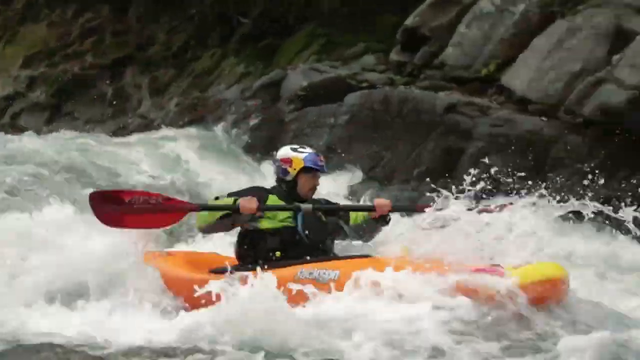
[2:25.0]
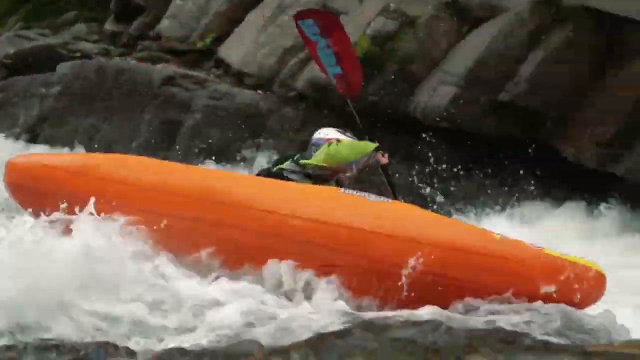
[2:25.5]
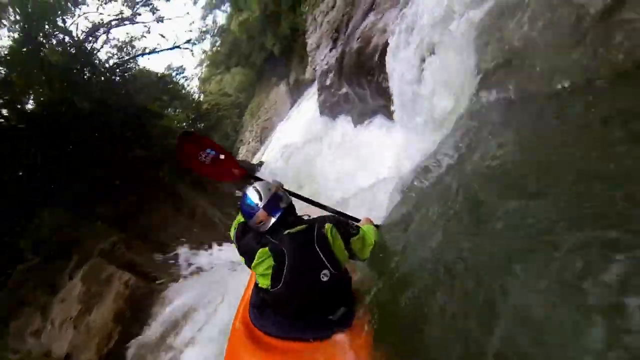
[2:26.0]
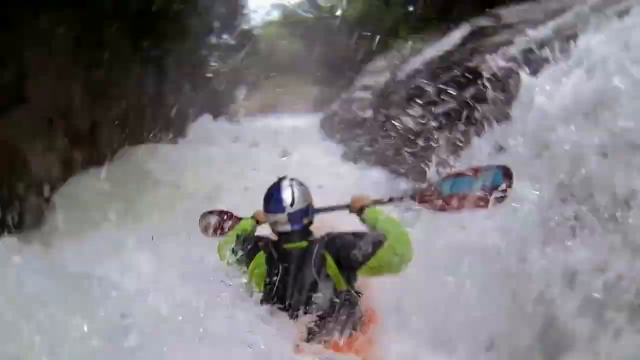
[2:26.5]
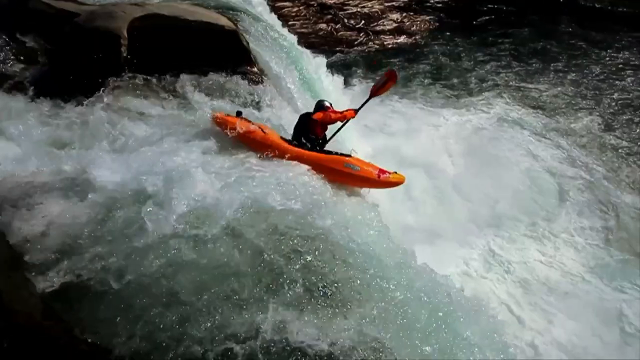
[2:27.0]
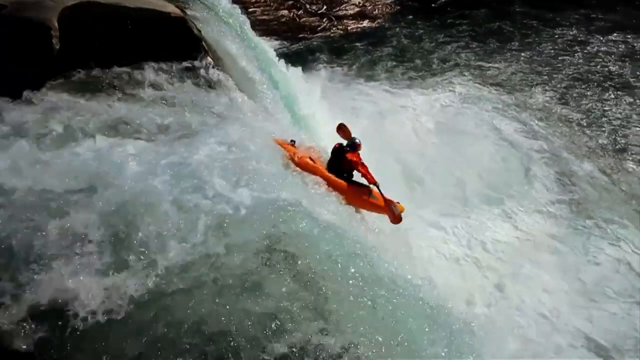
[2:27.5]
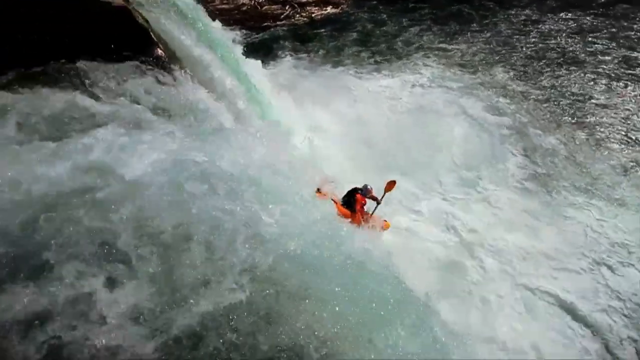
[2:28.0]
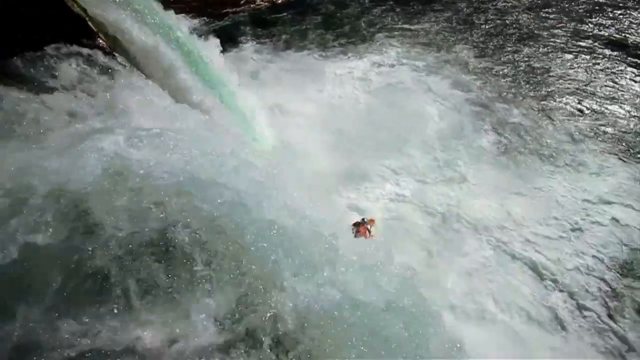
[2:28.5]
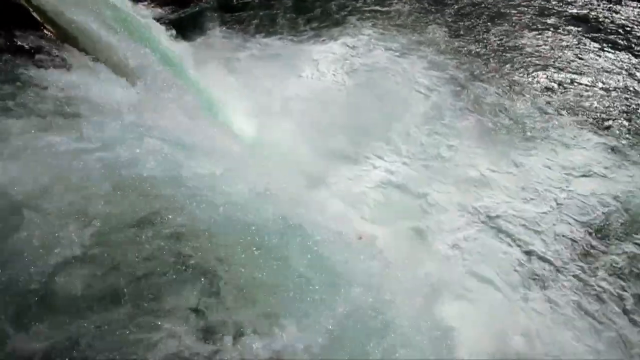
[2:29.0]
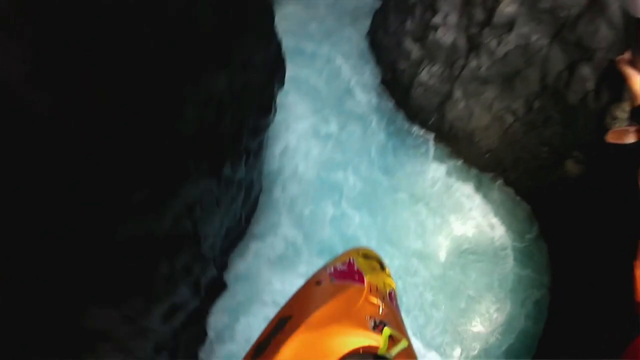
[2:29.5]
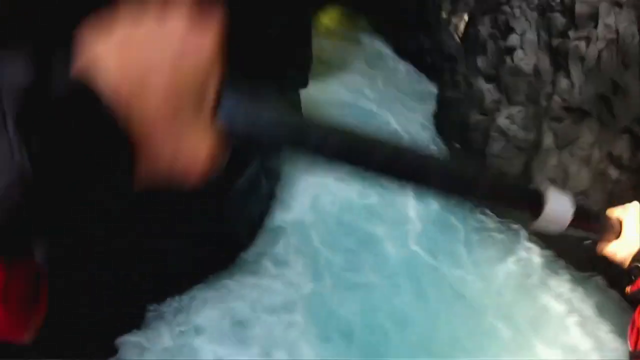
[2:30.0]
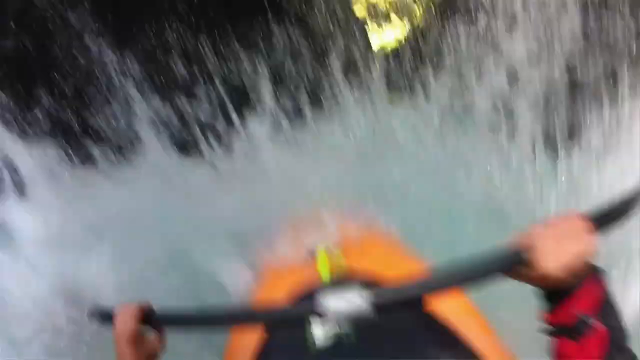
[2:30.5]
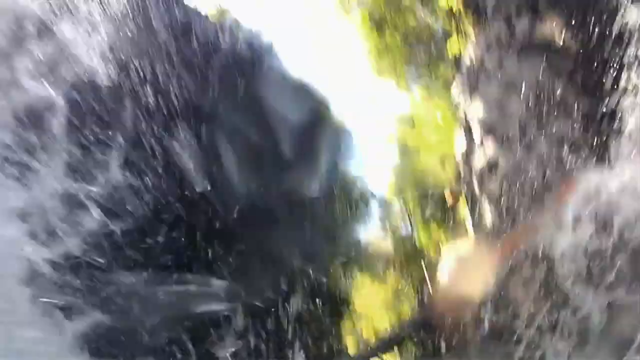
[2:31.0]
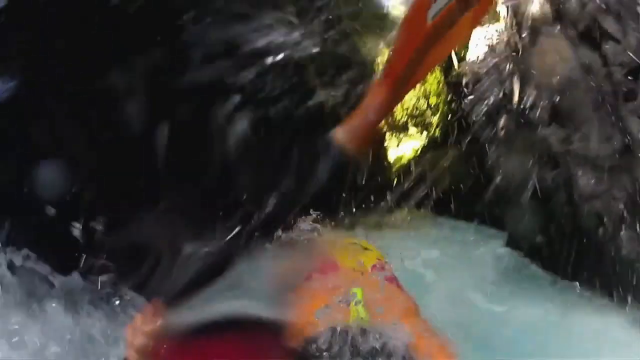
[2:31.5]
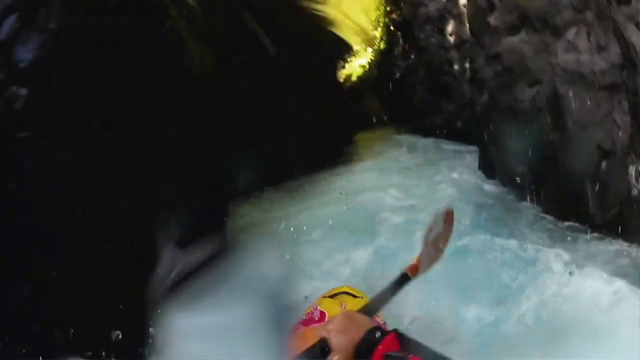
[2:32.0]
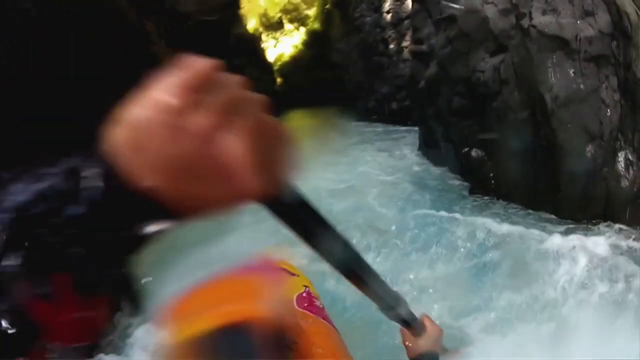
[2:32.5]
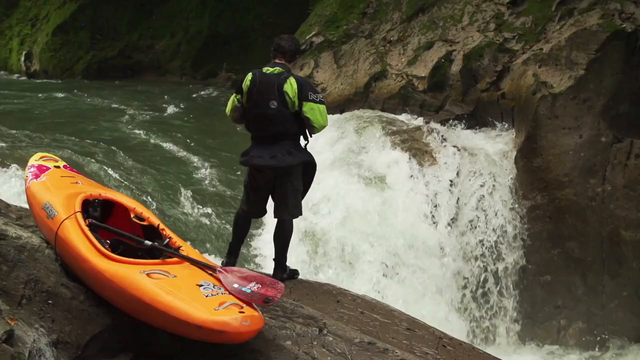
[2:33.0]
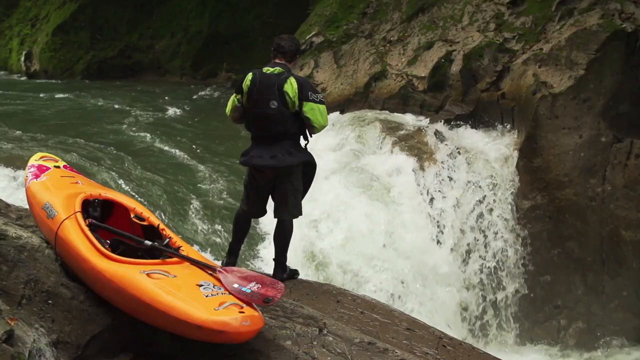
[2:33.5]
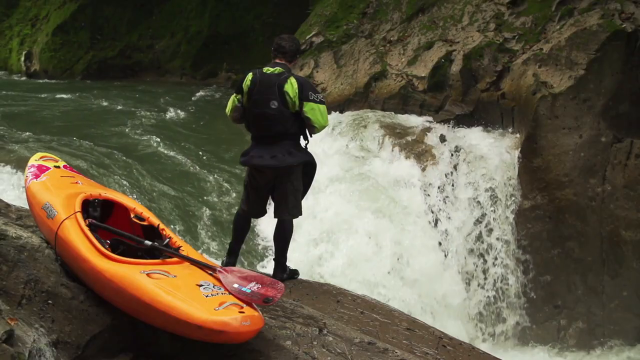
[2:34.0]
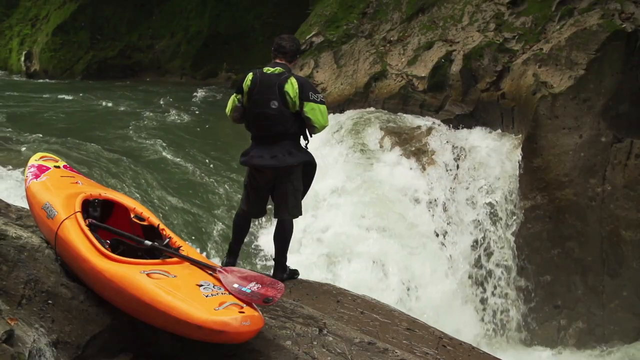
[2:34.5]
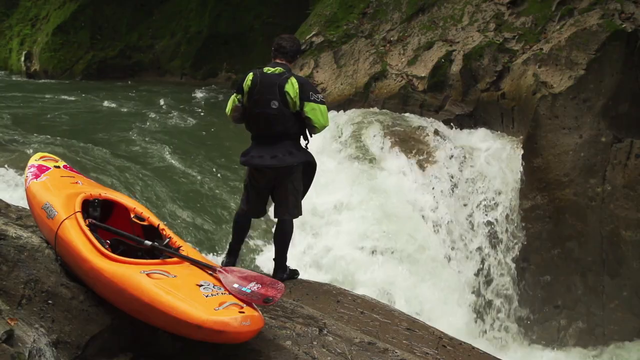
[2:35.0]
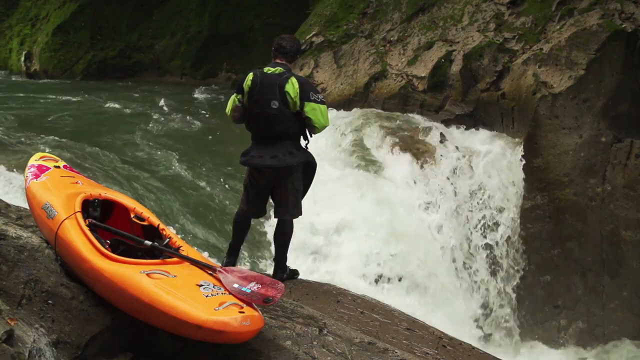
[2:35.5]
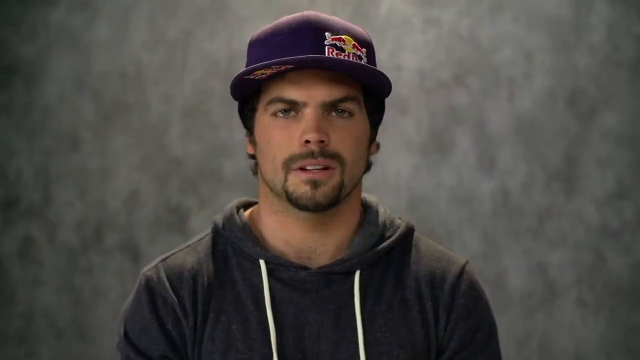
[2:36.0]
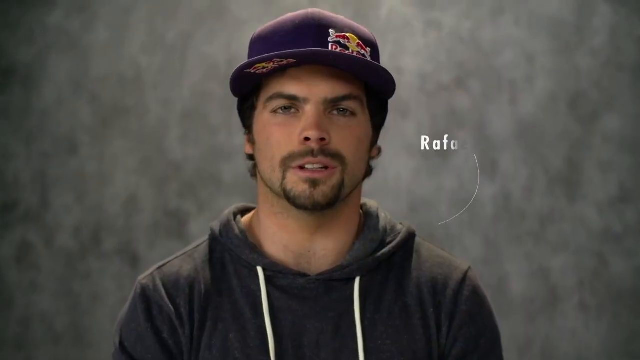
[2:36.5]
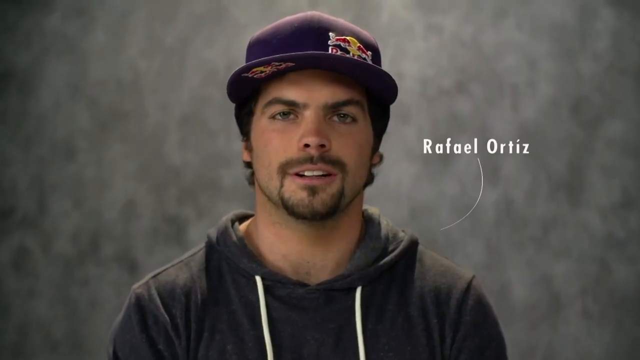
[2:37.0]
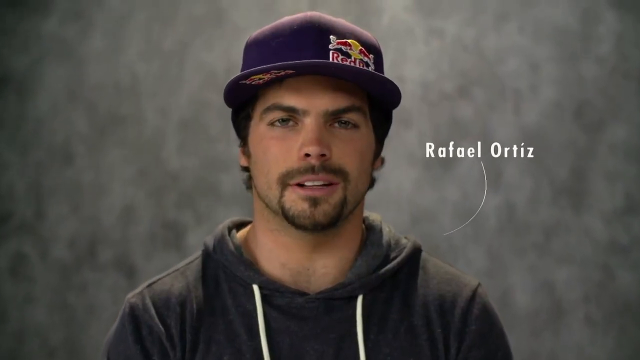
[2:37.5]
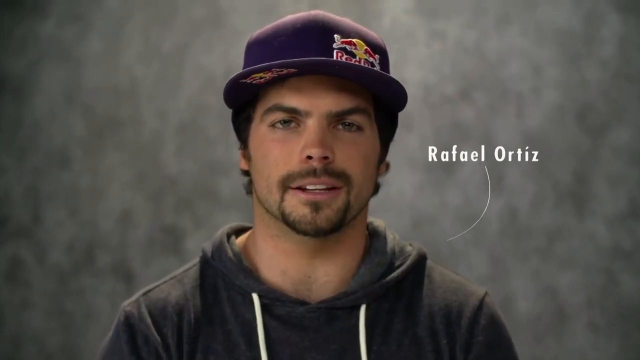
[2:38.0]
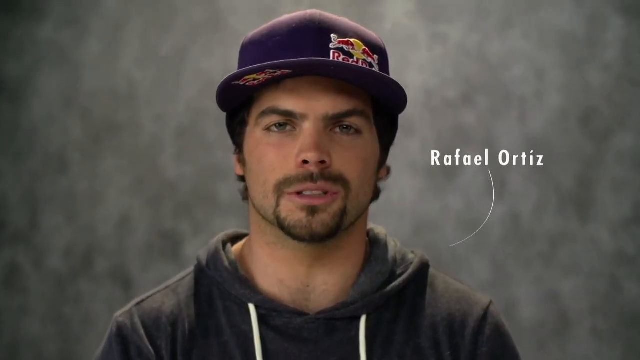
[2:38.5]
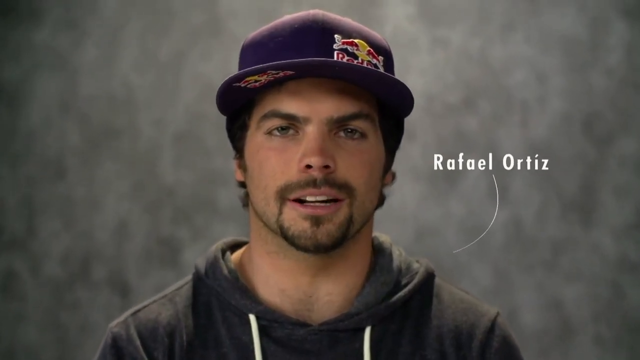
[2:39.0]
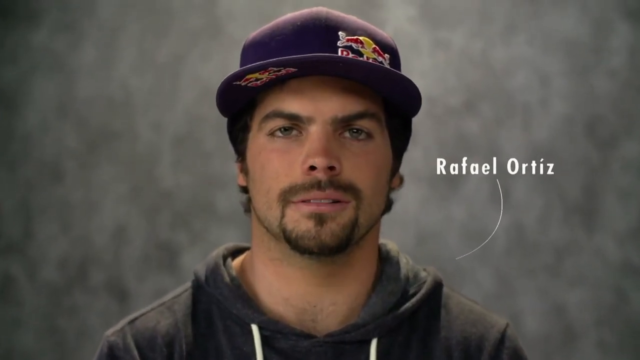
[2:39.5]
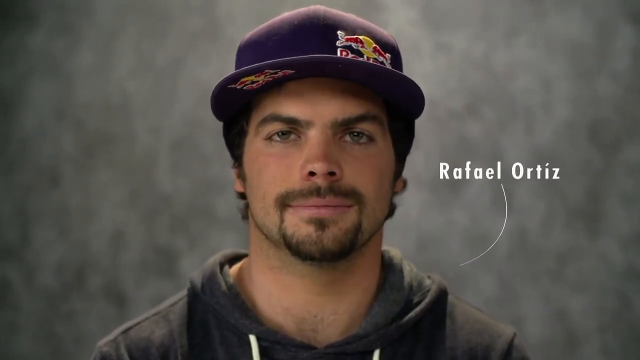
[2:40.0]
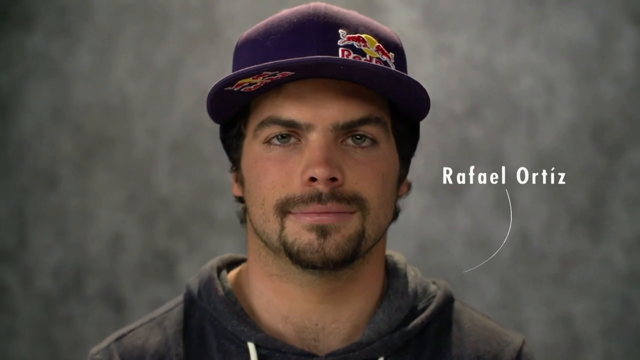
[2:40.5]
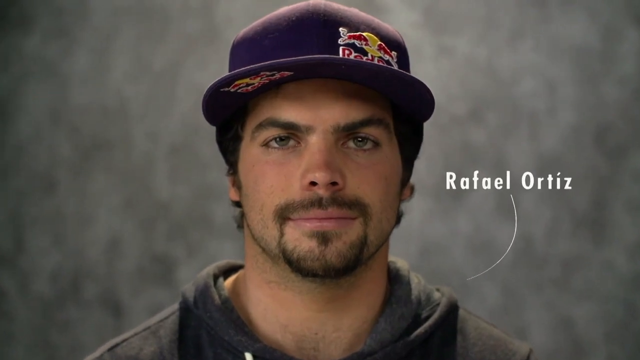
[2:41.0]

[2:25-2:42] What appears to be an outro opens with shots that look like river kayaking in foamy, harsh water. A bright orange kayak then goes over the edge of a waterfall, dropping what looks like 40 or 50 feet into a pool of water below, which is much calmer and less choppy. A cutaway shows the kayaker standing next to his kayak at the top of the waterfall, looking down at the water rushing by. The final portion appears to be in a film studio, where the kayaker sits wearing a gray hoodie and a purple baseball cap with the Red Bull logo, and subtitles at the bottom of the screen read "I am Rafa Ortiz. I practice extreme kayaking and I am a Red Bull athlete."